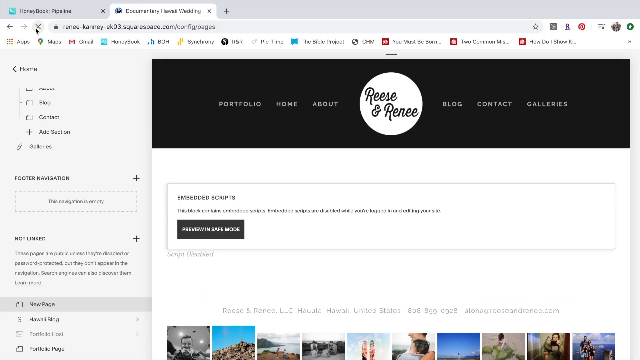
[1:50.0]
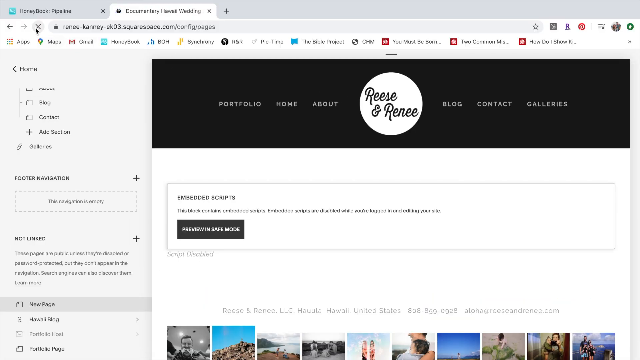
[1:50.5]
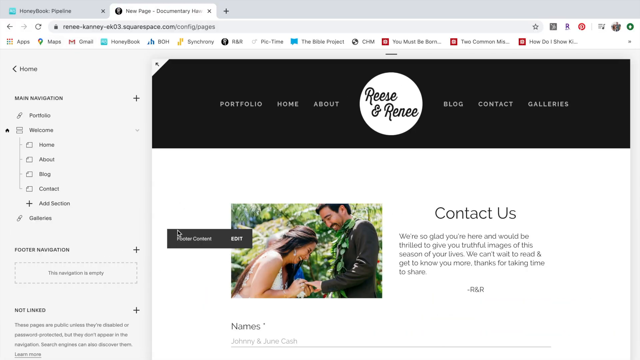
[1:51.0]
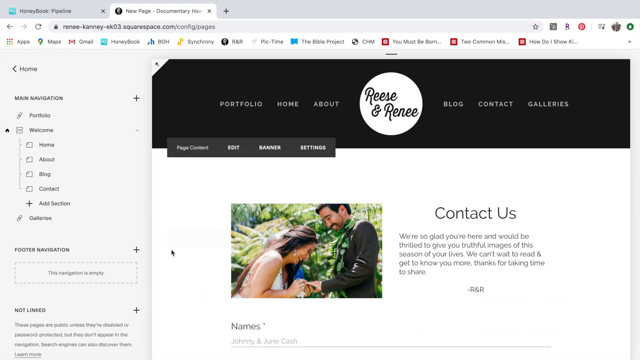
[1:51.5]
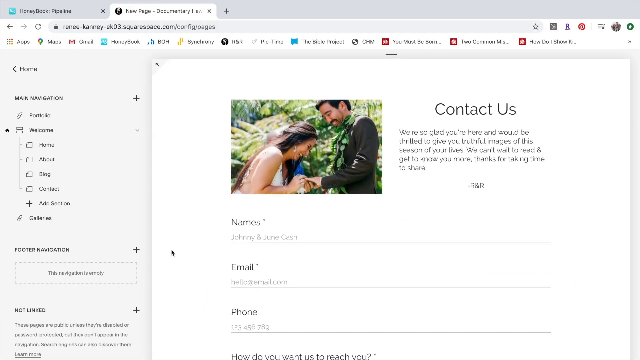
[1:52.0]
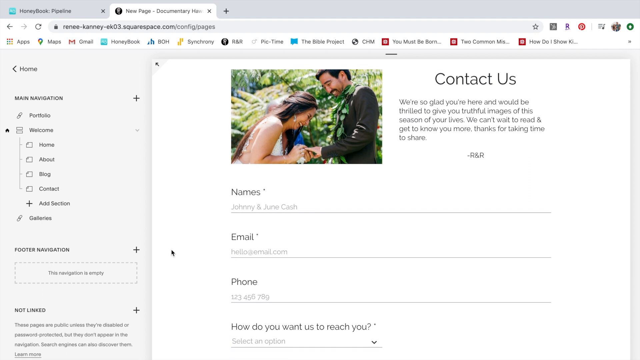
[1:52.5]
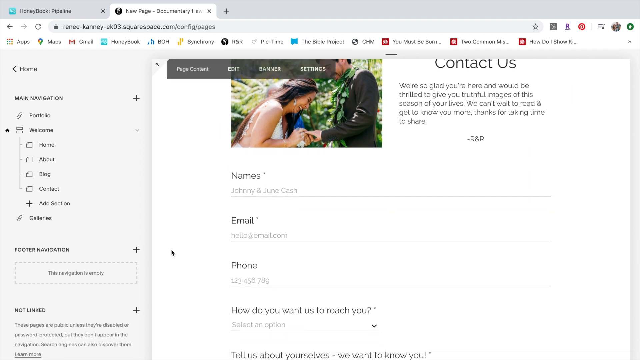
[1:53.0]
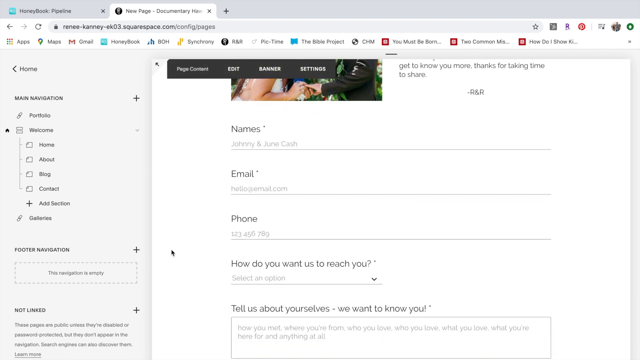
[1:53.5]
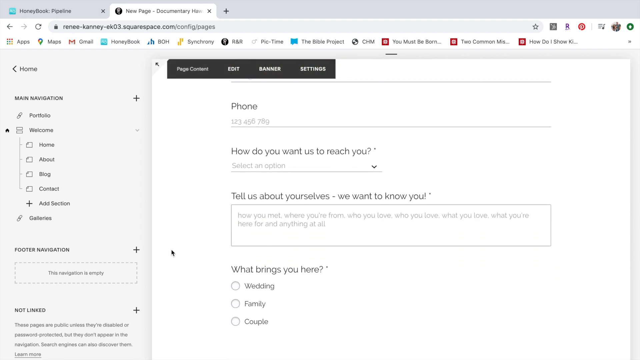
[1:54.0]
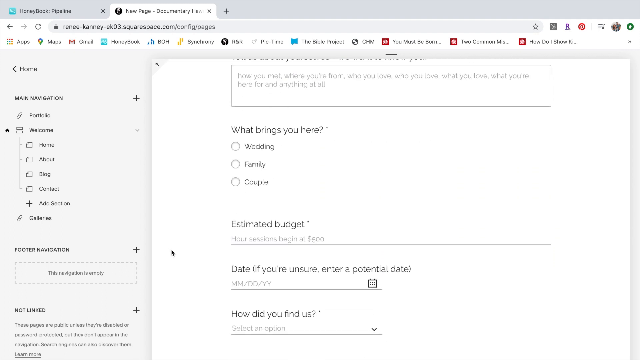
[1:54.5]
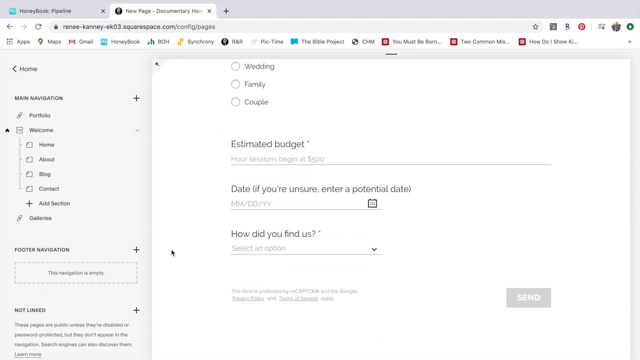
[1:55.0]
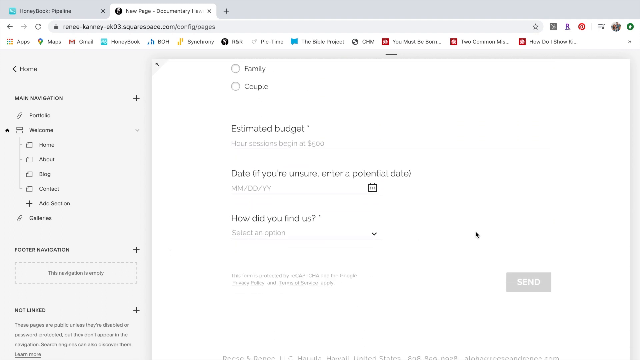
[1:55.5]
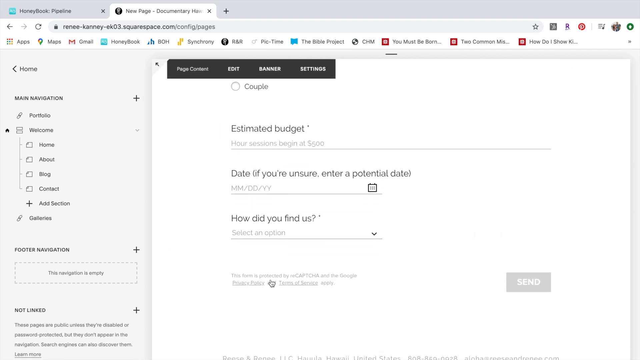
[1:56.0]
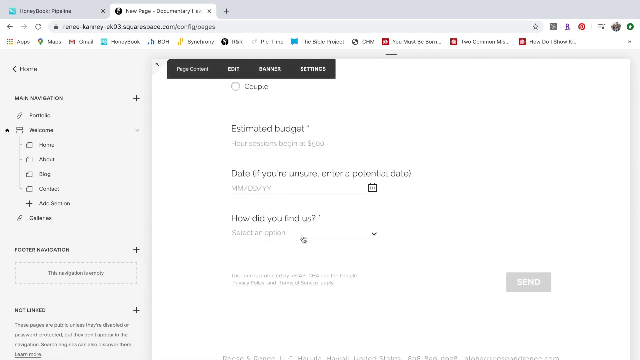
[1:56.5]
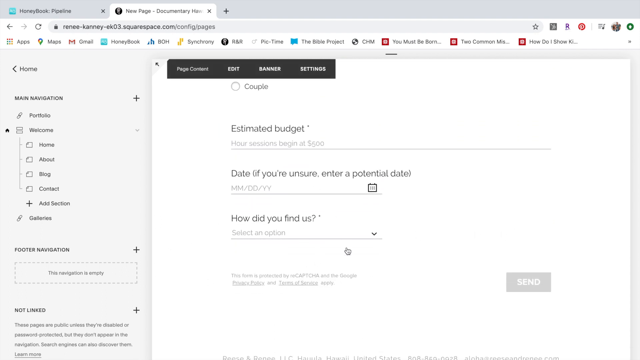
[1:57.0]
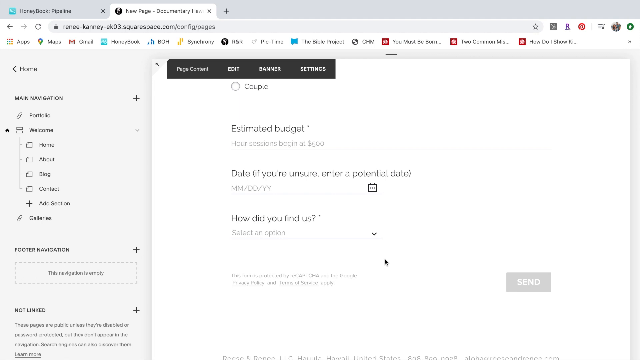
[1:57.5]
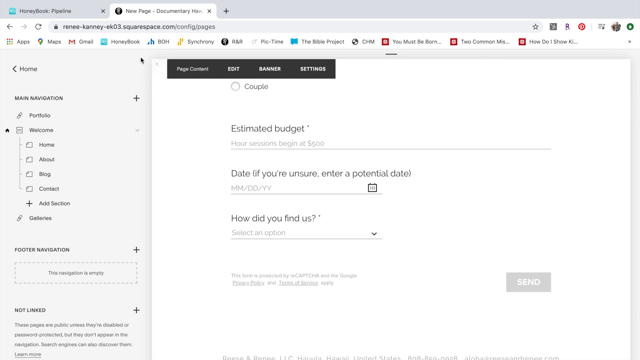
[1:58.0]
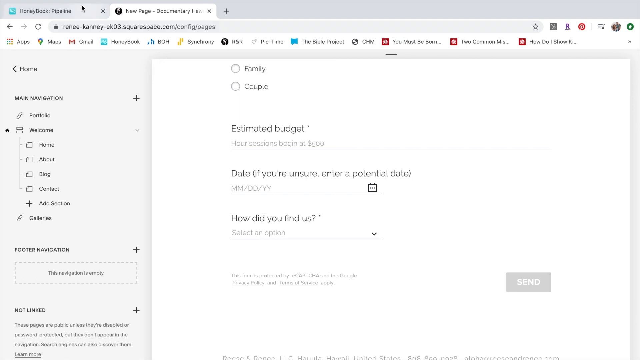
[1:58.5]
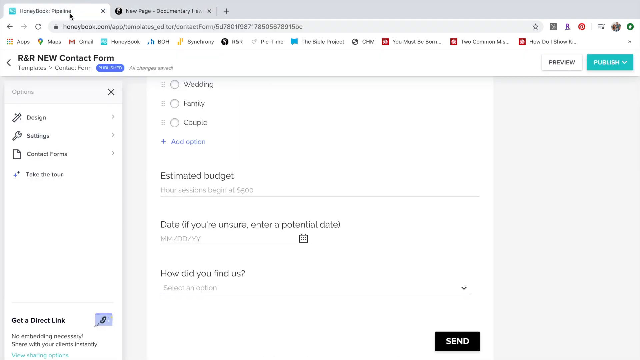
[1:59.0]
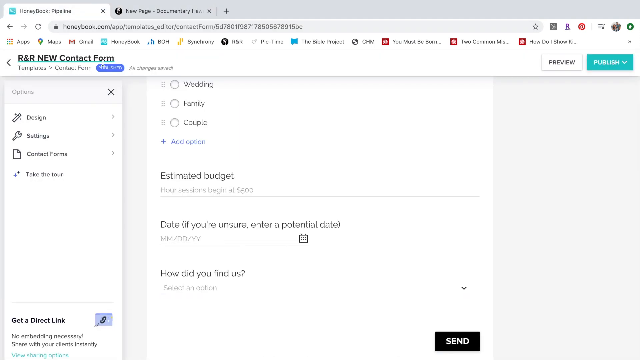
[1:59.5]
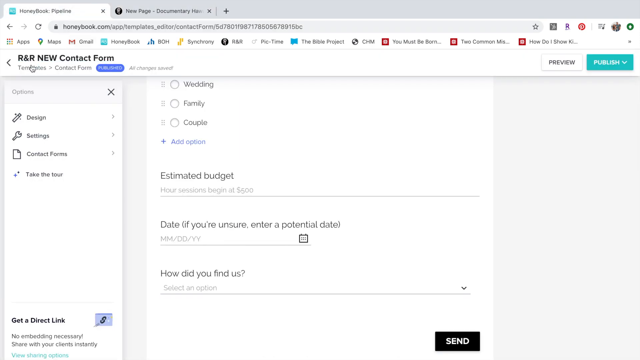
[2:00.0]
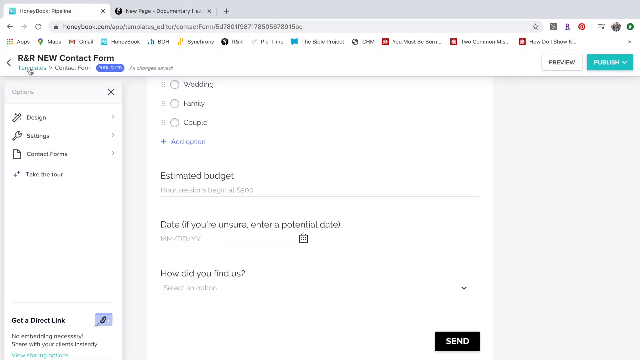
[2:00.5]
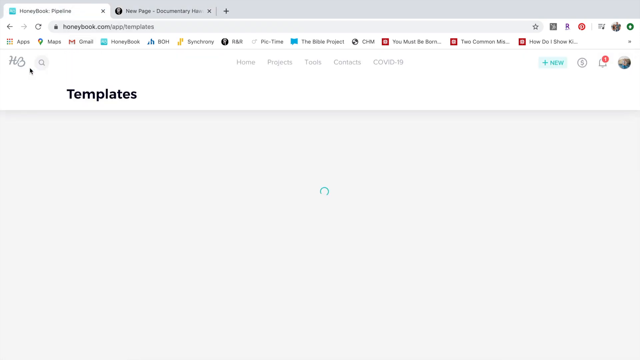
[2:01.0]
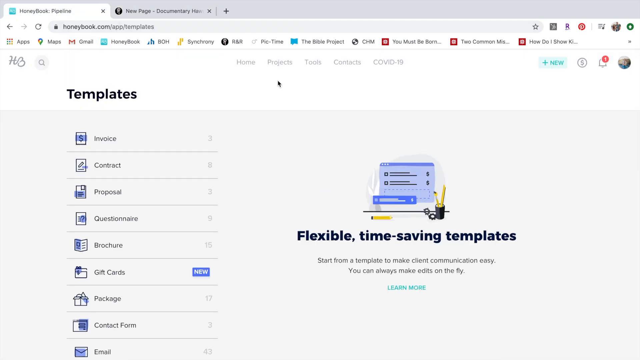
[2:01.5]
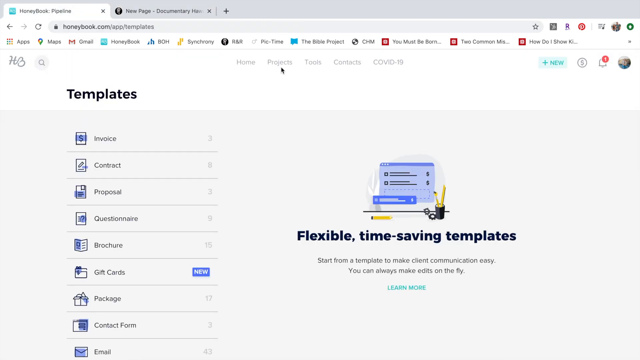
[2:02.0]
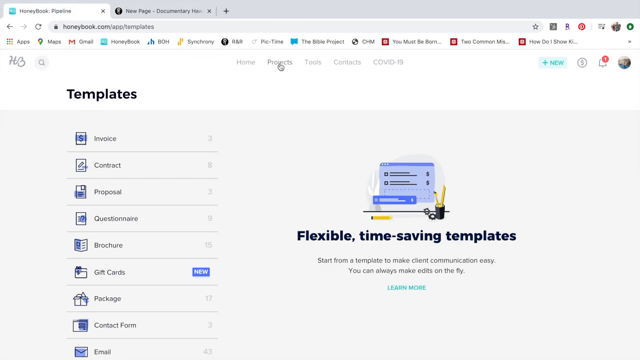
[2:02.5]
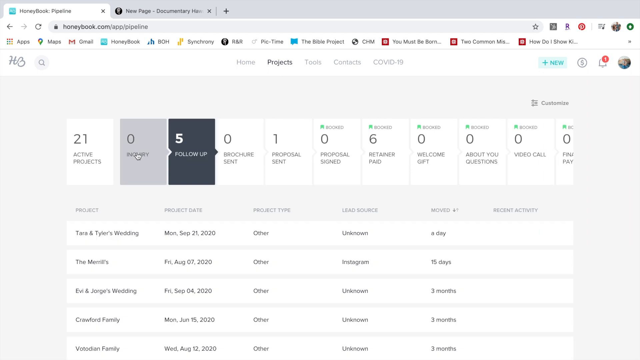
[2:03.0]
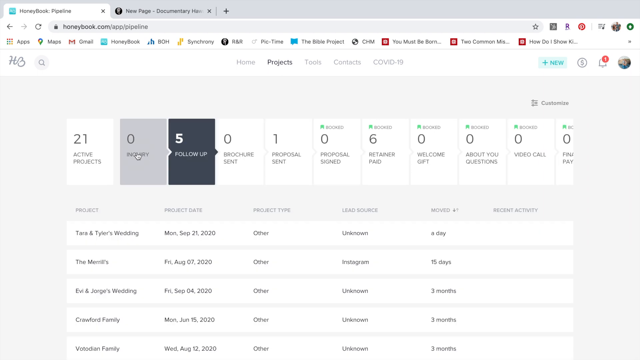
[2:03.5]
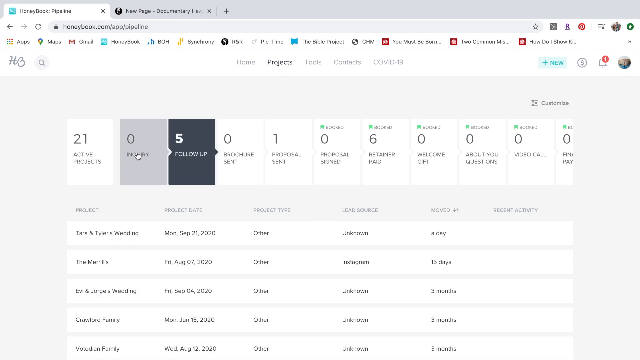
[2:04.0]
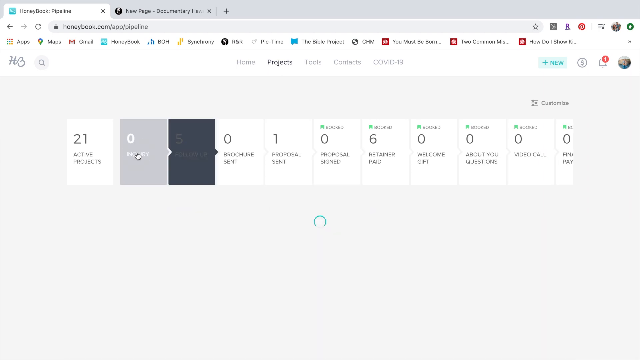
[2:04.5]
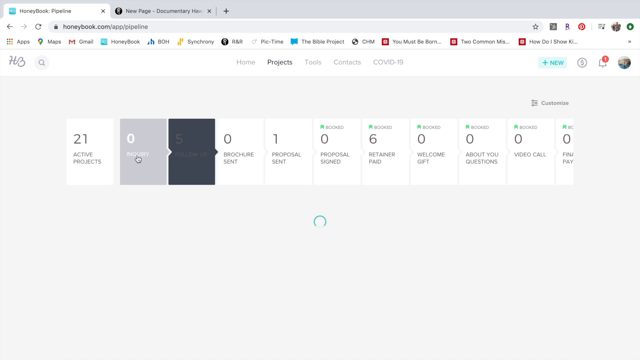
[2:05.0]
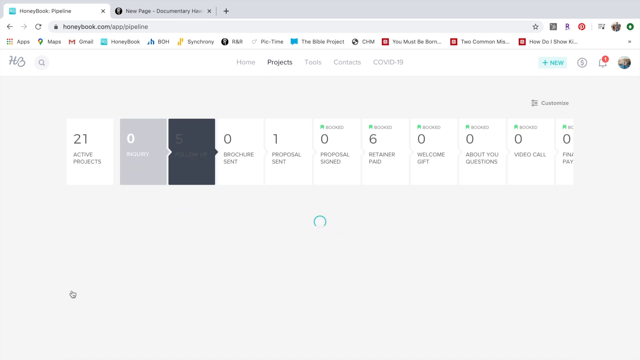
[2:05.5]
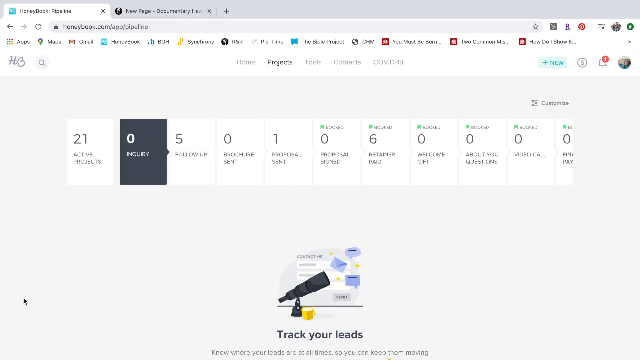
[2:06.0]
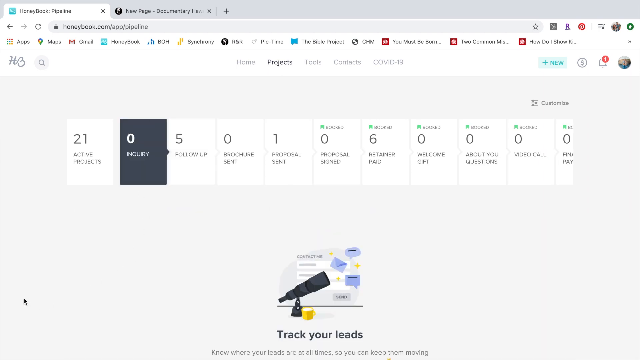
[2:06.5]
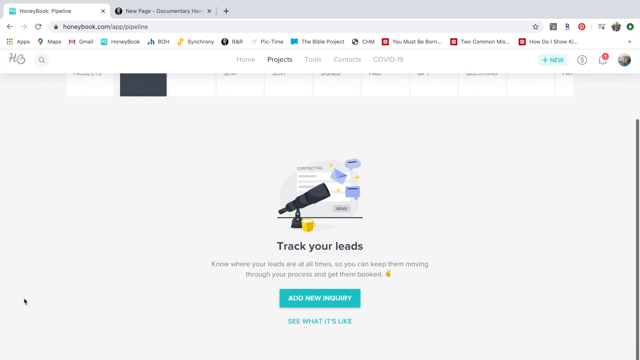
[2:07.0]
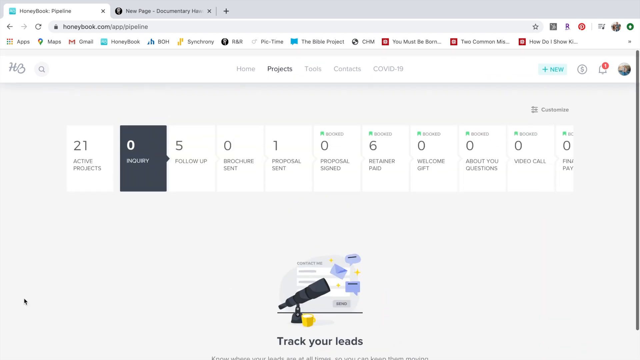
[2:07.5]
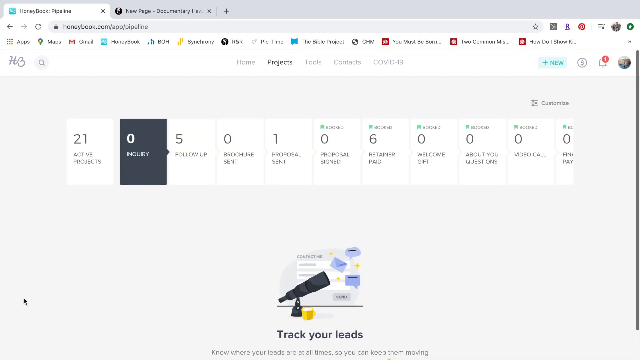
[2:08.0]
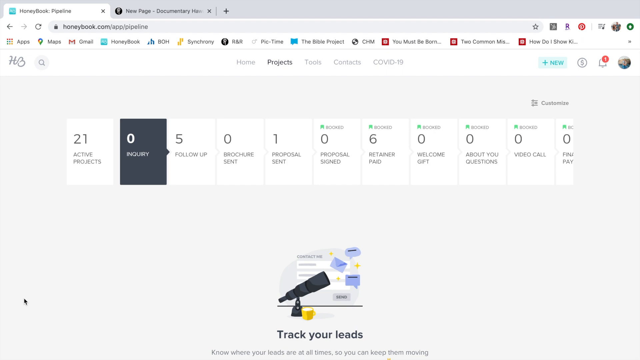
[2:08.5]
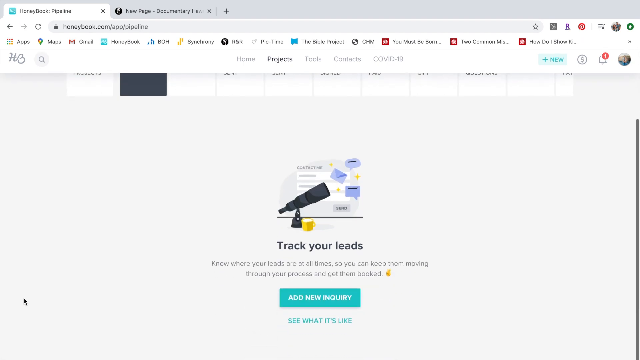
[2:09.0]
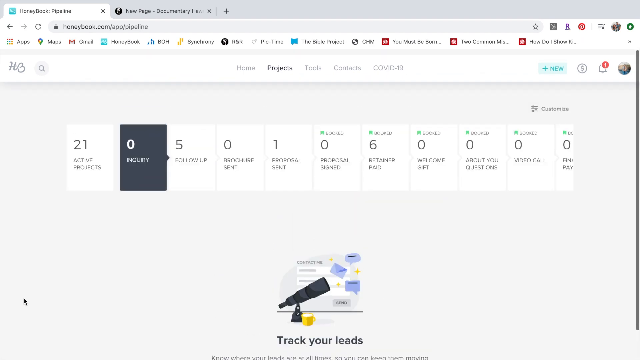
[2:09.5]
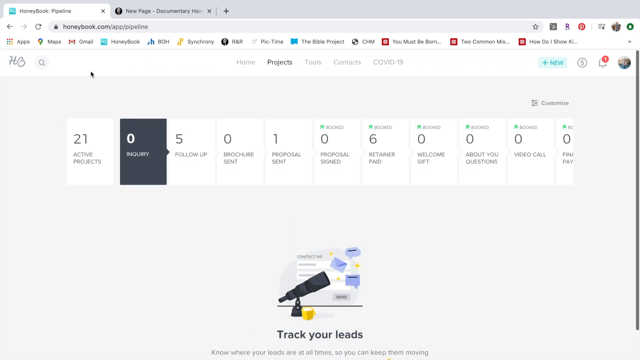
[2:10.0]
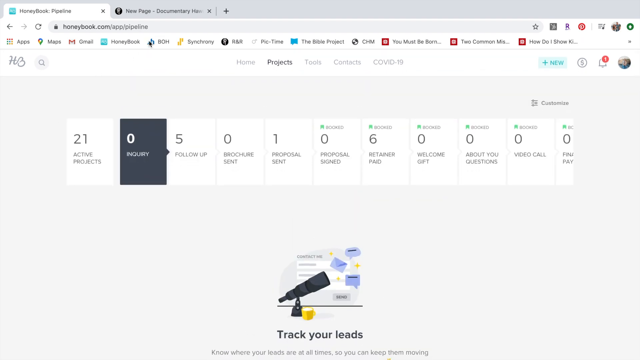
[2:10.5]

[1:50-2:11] An internet browser has two active tabs, with the second tab showing a Squarespace web page for a wedding that is being created and edited. It is a contact us page with a form layout. The user scrolls through the form with the mouse, showing the different questions such as names, emails and phones, all the way to the bottom. They then move the cursor to the top left-hand corner of the browser and select the first tab, which has honeybook.com loaded. Using a breadcrumb in the top left part of the screen, they navigate to the template page. Once it loads, they click a button called enquiry in the top left centre of the screen, which shows that there are no enquiries currently available to look at.